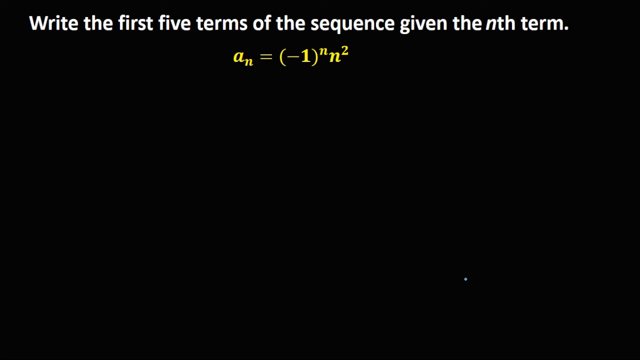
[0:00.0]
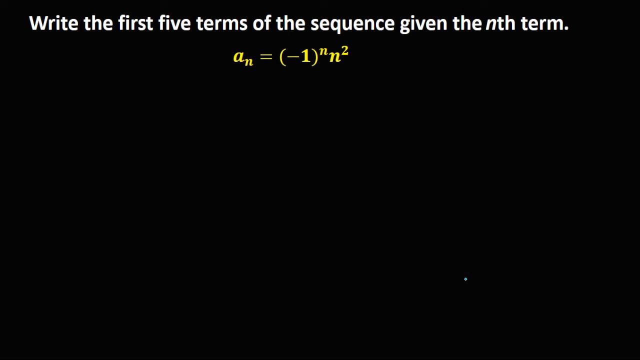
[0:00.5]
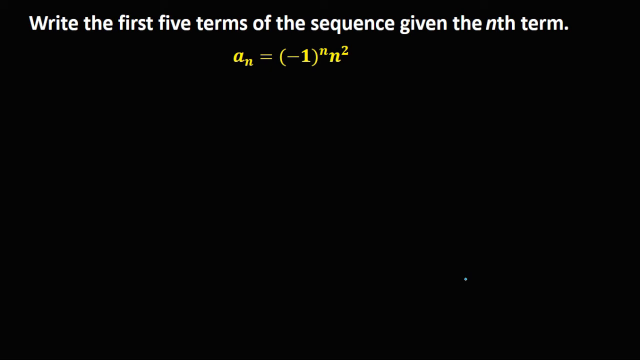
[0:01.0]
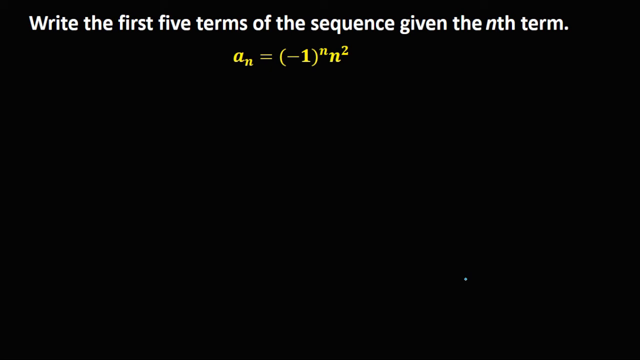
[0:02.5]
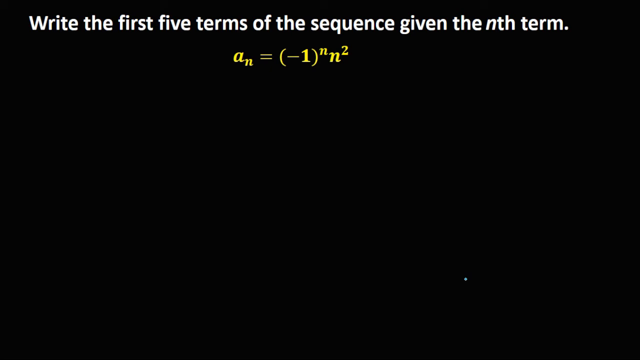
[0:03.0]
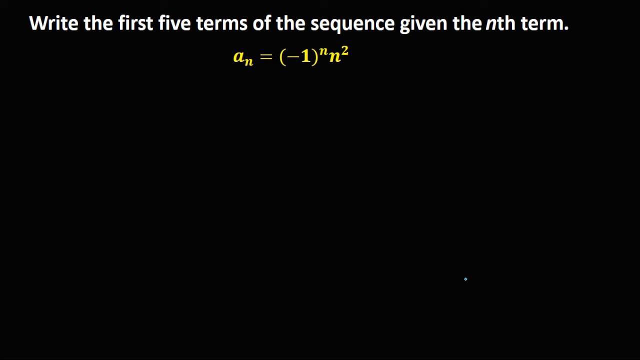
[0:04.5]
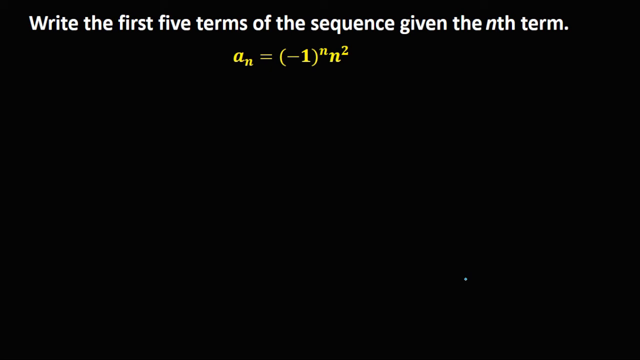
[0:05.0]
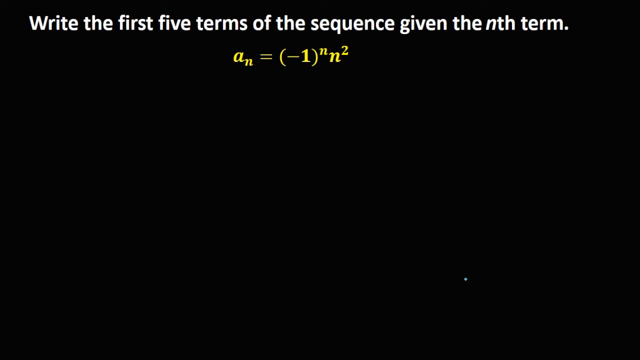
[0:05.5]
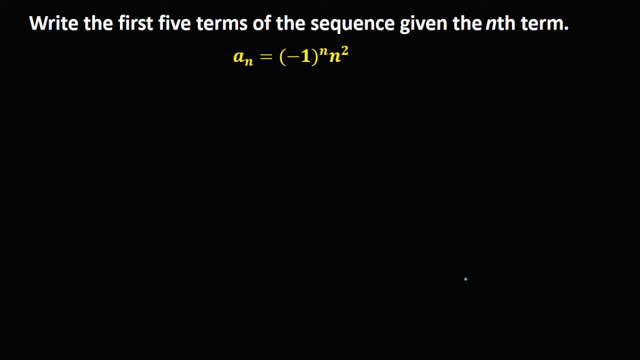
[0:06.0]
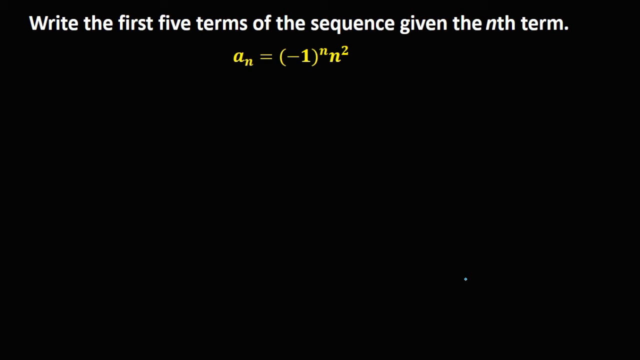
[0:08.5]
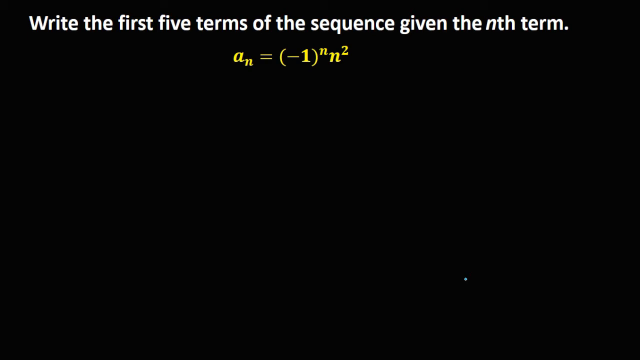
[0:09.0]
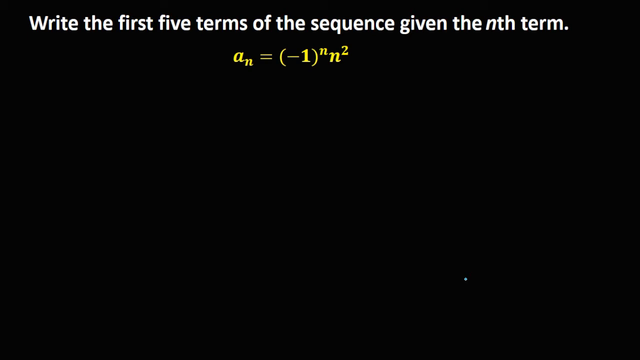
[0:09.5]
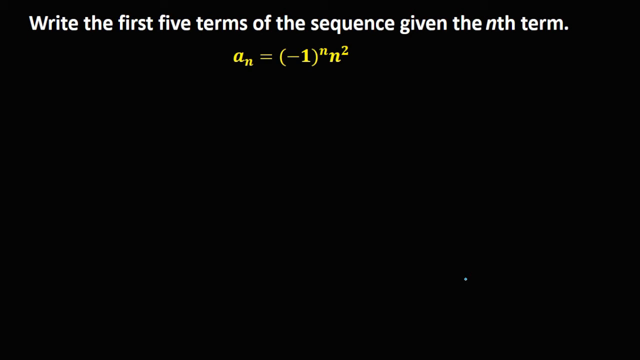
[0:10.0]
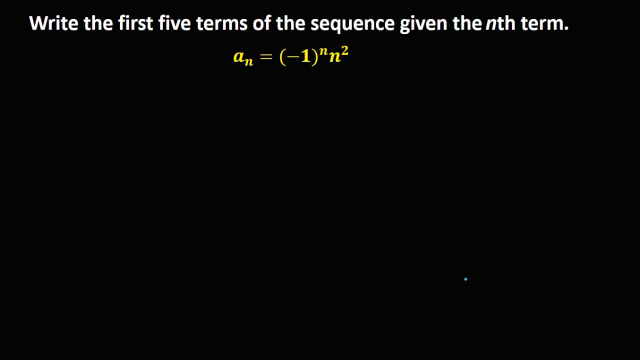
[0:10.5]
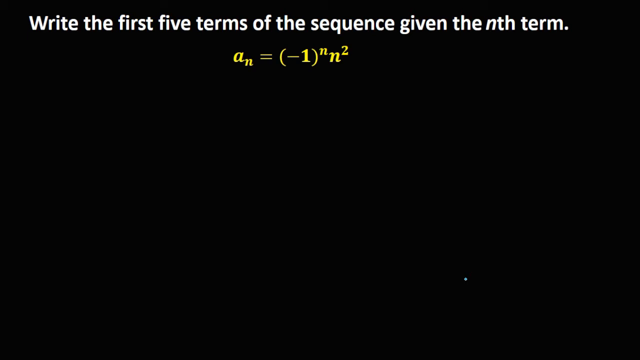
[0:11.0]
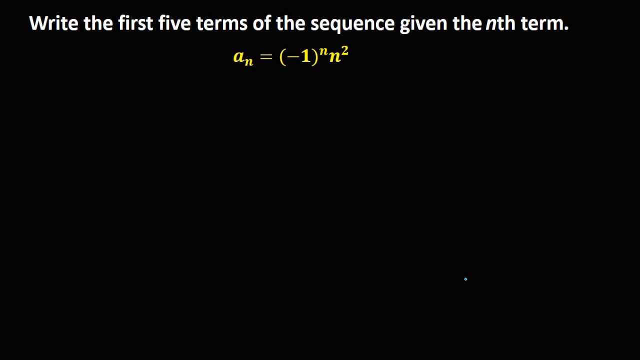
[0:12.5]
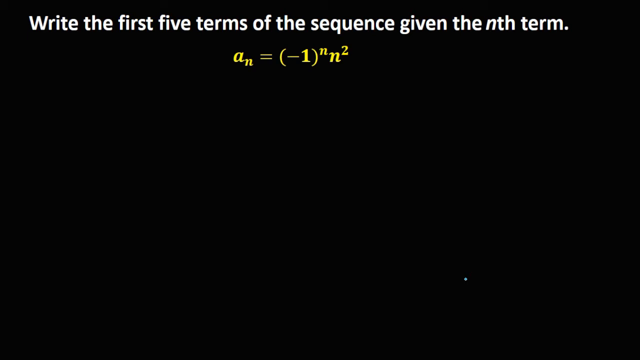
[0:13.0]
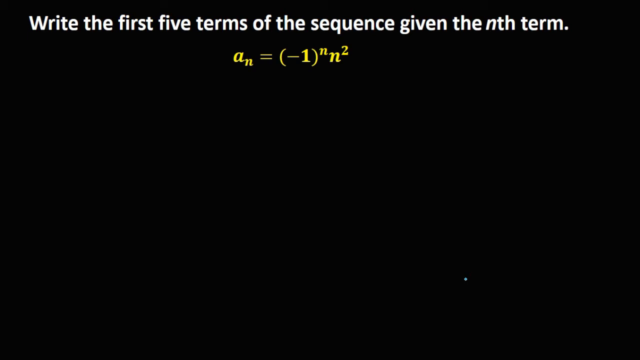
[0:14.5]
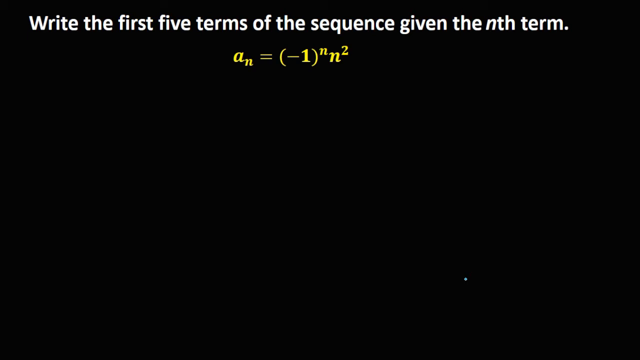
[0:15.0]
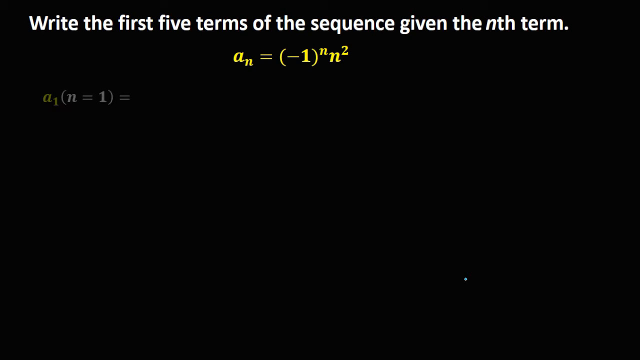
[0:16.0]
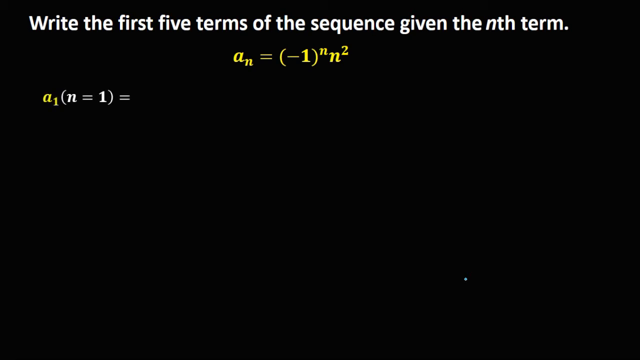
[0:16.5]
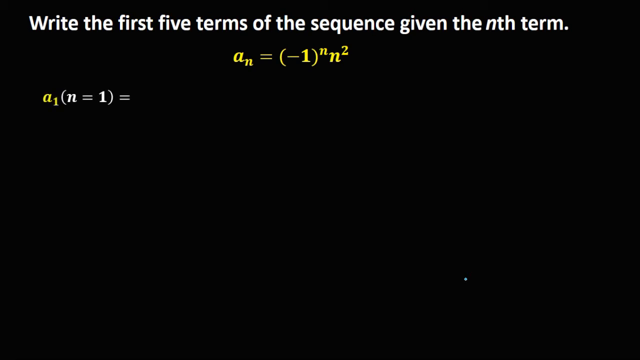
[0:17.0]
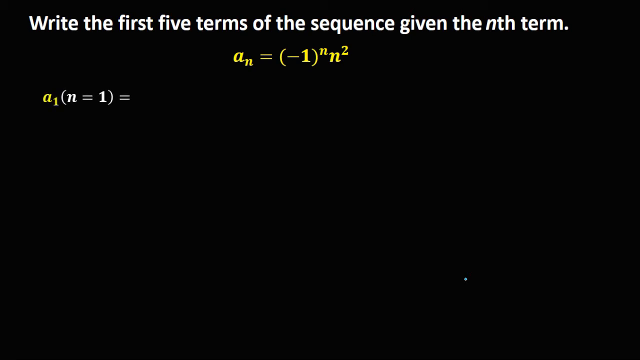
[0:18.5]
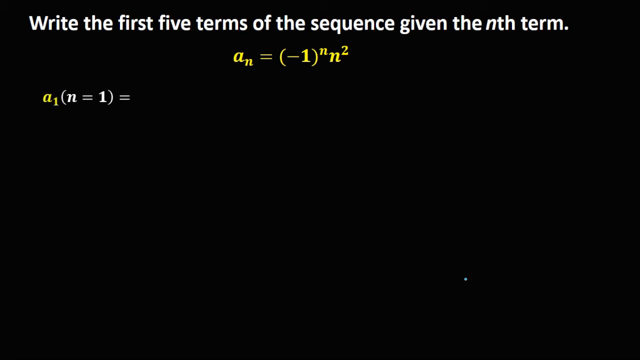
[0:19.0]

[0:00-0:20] An algebra tutorial on solving math problems begins. The task is to write the first five terms of the sequence given the nth term, where a subscript n equals negative one to the nth power multiplied by n squared. The first example is set up as a subscript 1, with n = 1 in parentheses, followed by an equals sign. The same rule is to be applied for a subscript 1 through a subscript 5.